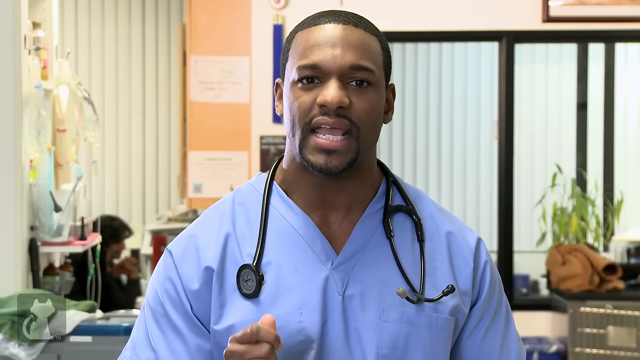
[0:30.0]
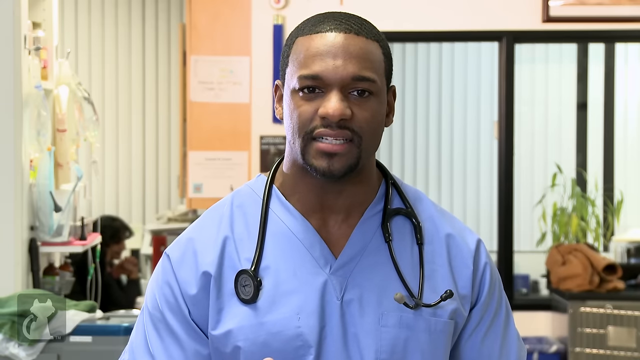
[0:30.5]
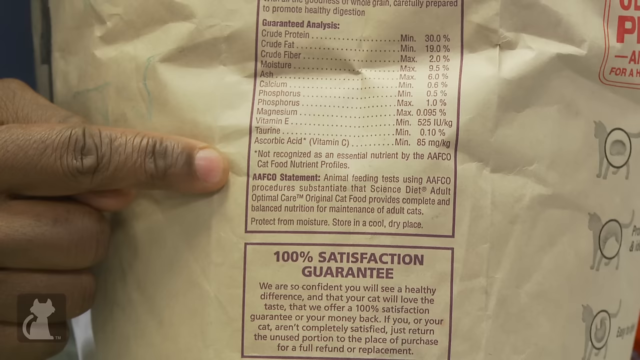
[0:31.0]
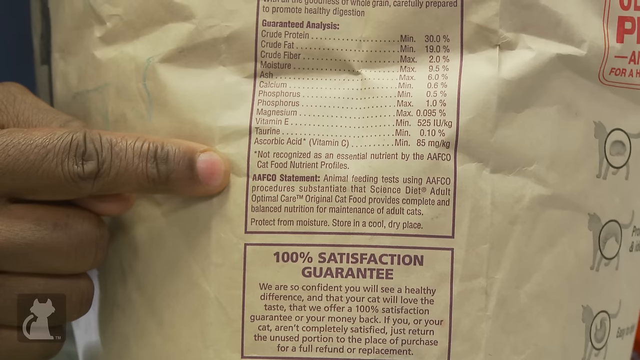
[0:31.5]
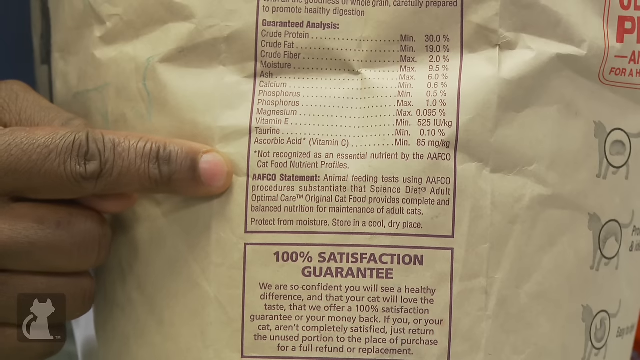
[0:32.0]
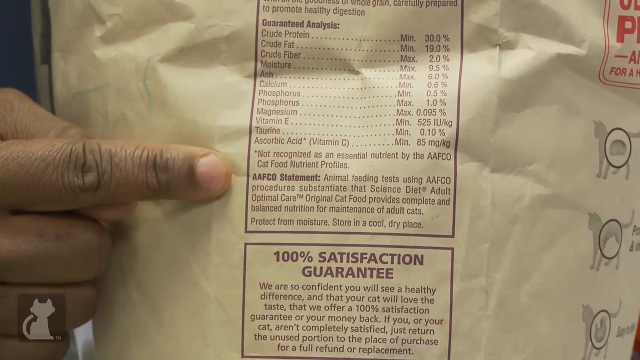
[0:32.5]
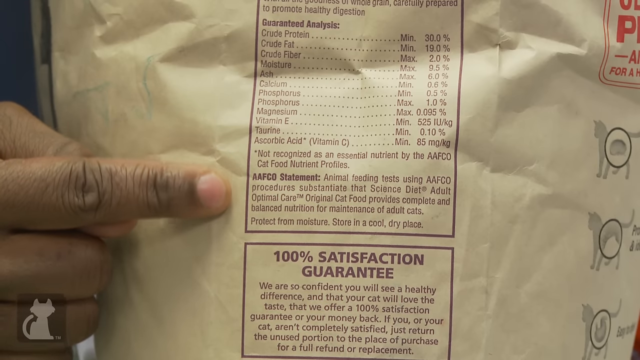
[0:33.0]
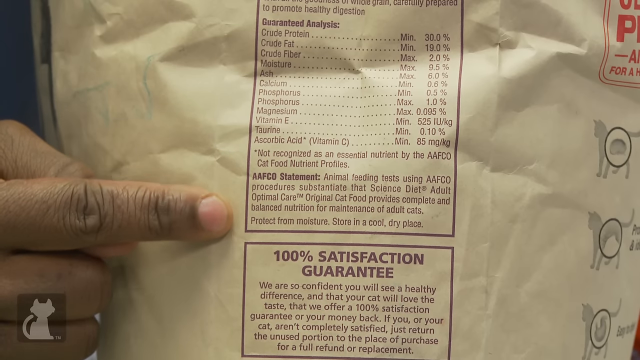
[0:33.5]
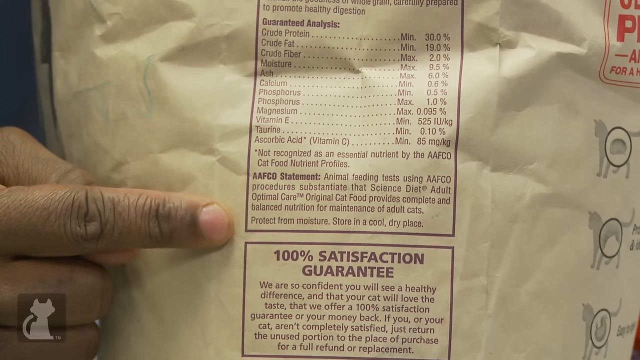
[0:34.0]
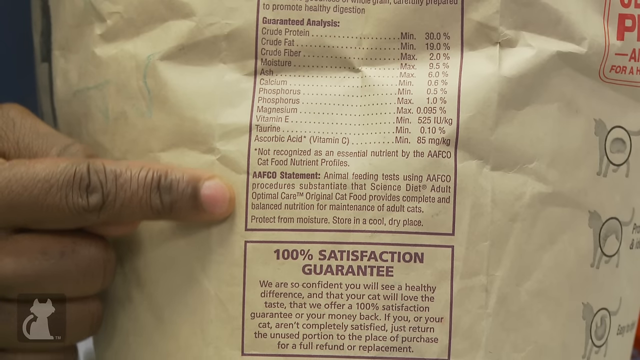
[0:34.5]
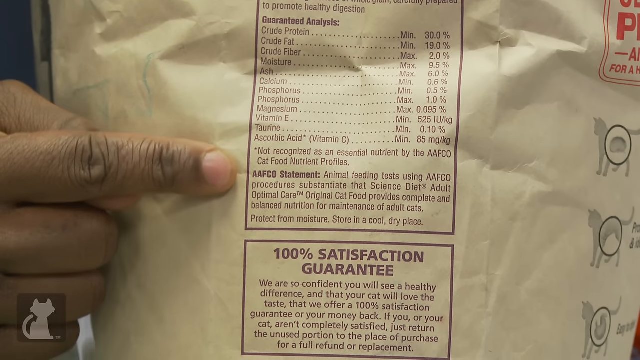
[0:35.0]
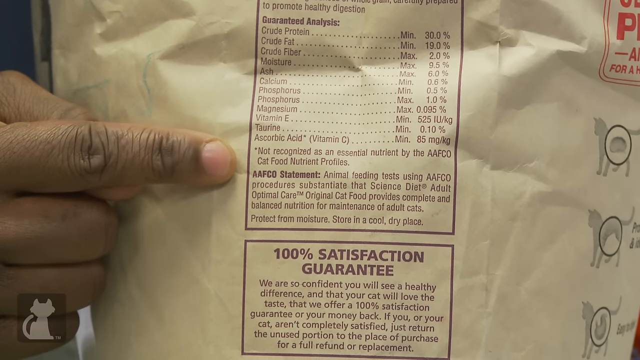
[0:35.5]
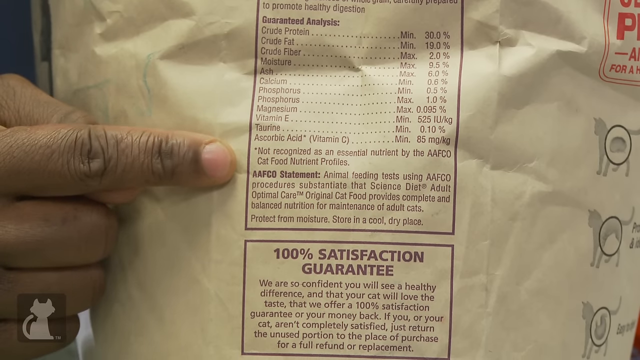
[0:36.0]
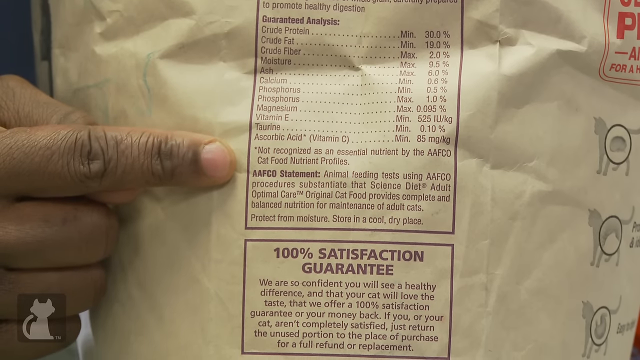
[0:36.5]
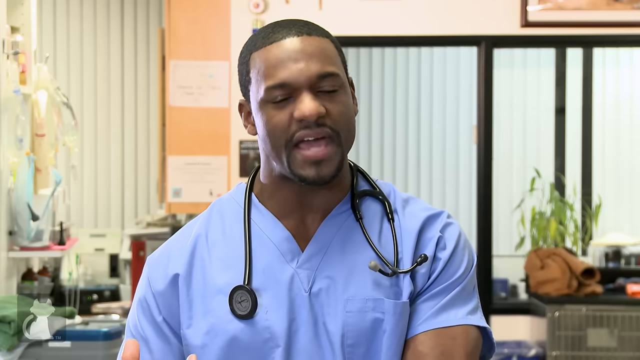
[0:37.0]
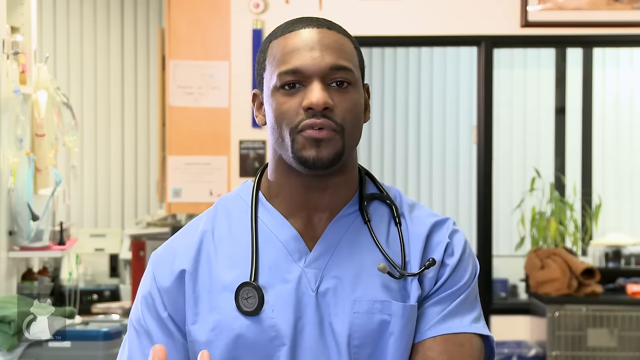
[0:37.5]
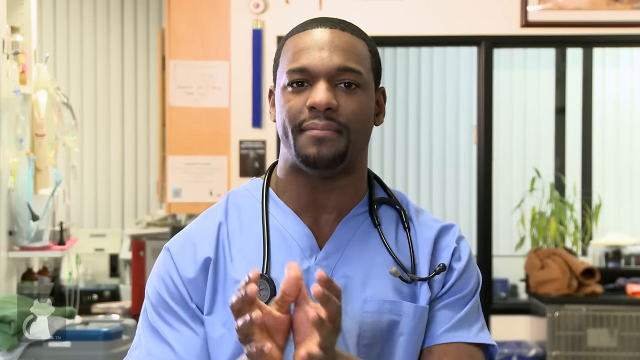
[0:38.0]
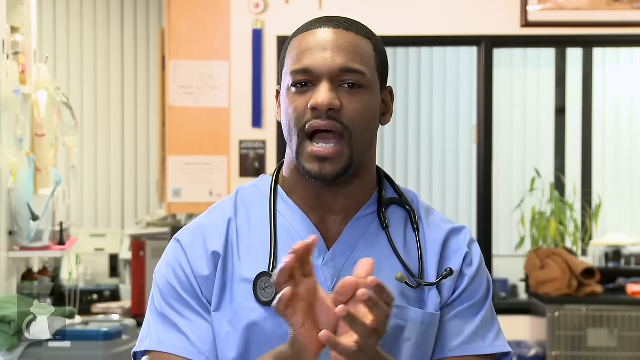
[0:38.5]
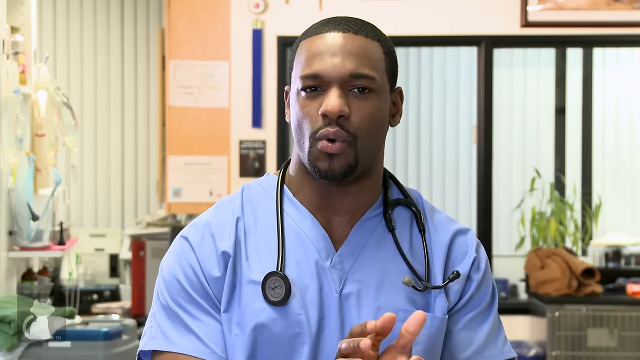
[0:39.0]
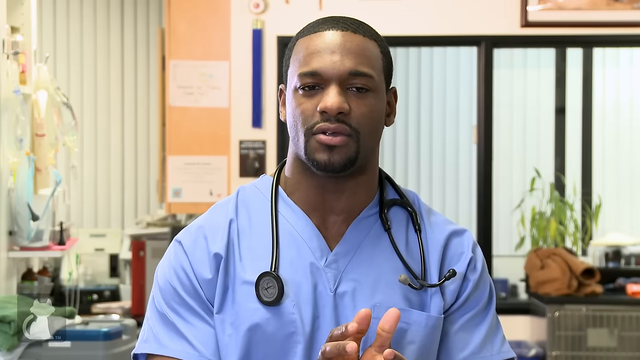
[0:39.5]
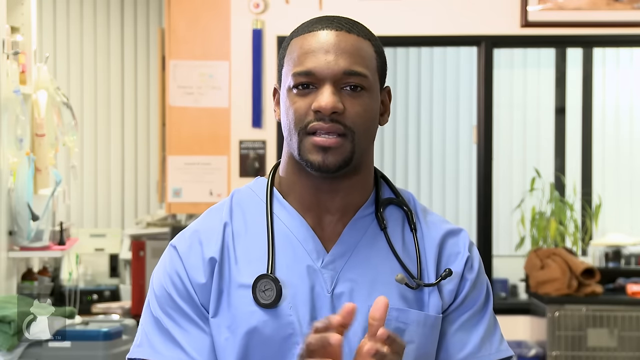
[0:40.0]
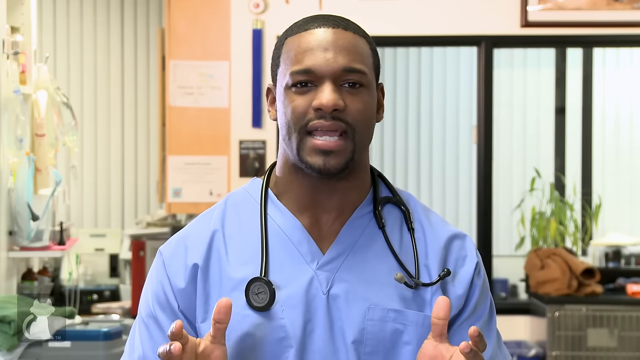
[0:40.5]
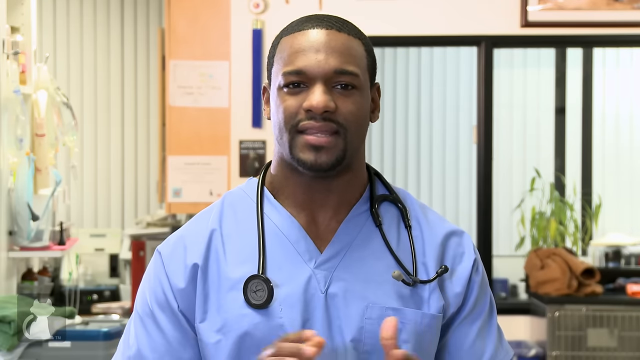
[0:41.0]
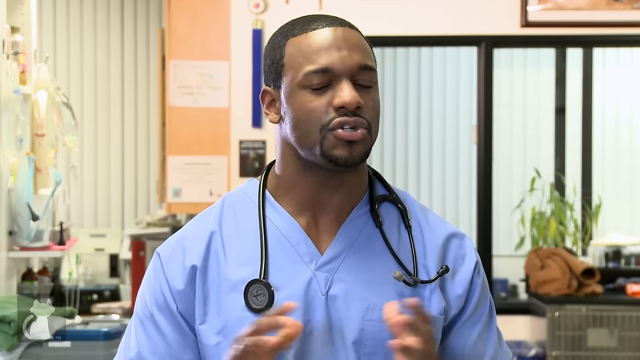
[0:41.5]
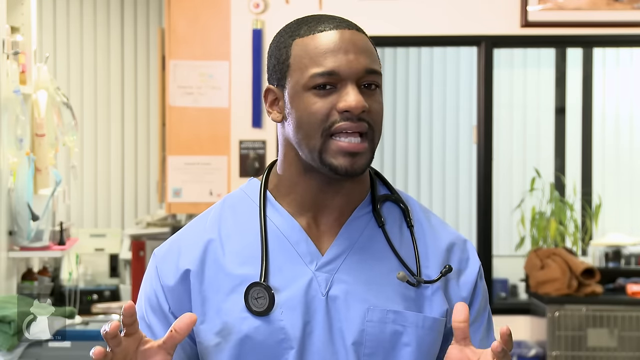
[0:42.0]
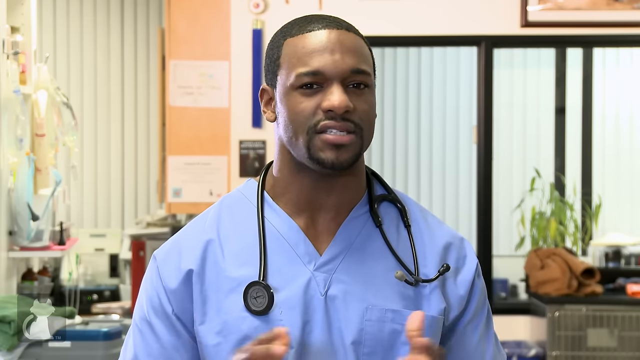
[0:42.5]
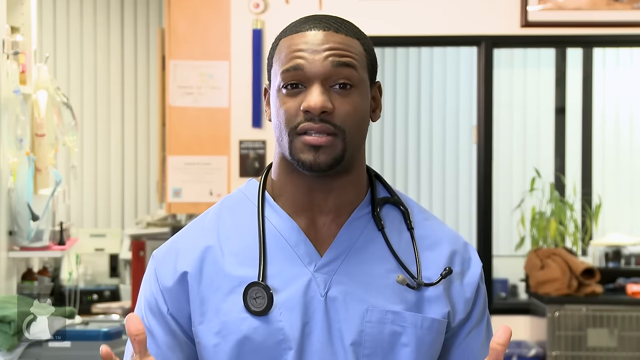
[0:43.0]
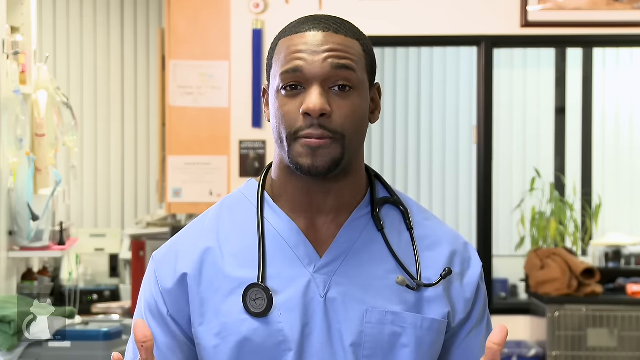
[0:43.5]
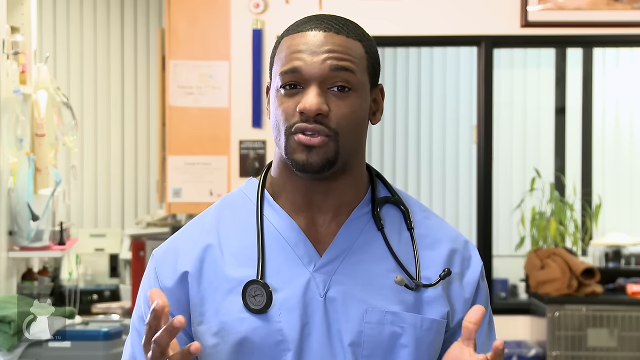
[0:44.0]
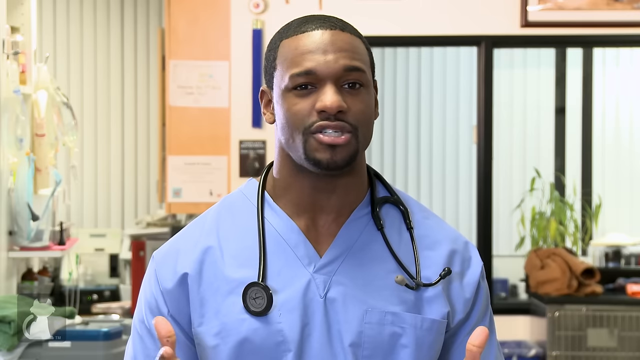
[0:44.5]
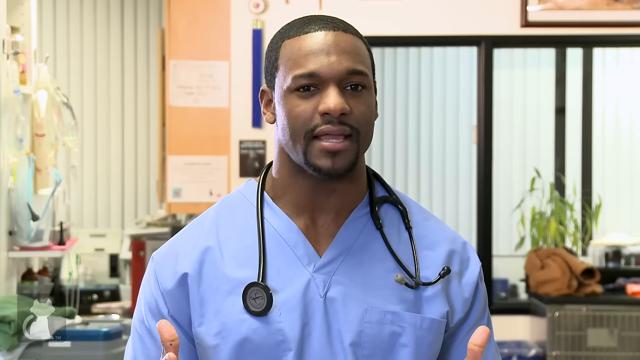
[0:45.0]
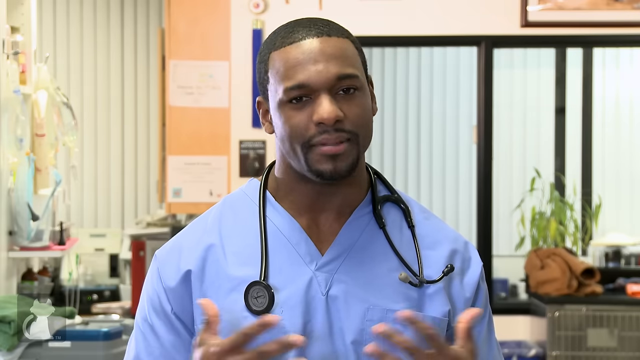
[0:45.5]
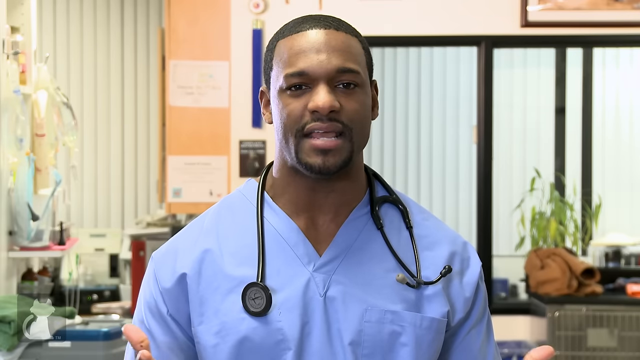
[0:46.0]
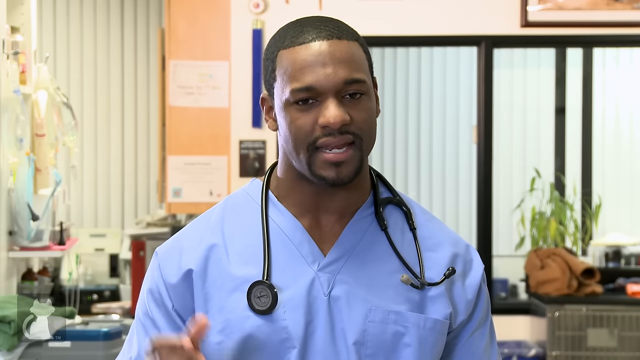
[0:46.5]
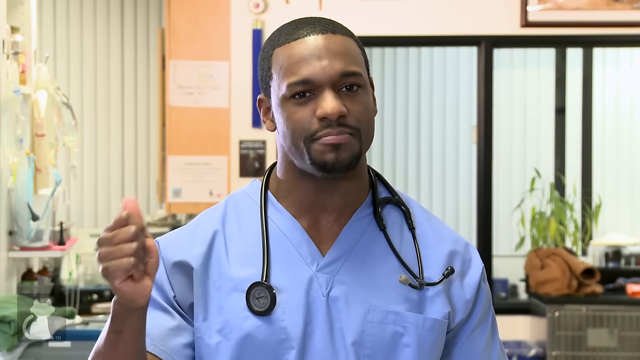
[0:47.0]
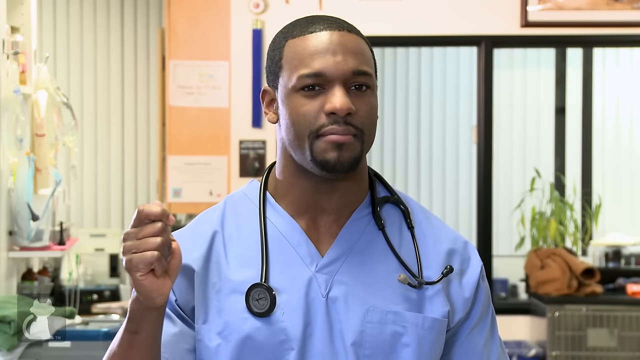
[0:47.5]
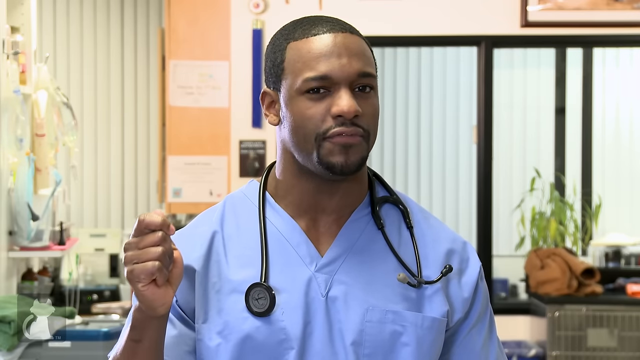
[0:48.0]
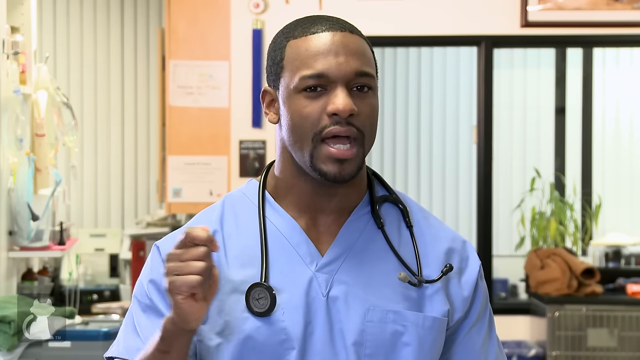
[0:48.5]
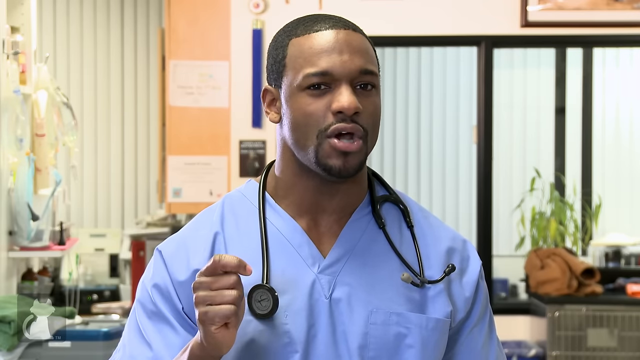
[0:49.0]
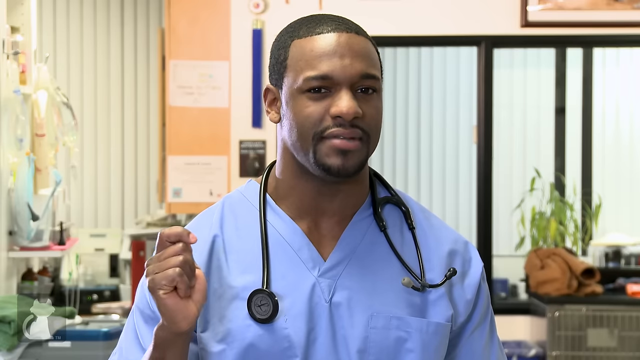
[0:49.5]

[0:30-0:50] A man in blue scrubs has a black stethoscope draped across the back of his neck. He is a Black man with very close-cropped hair and a thin, well-styled beard and mustache. He speaks inside what looks like a medical office, with potted plants in the background to the right, sliding doors, and white office drapes. Next, the man's finger points in from the left side of the frame at a nutritional label on what looks like a pale brown bag or package. On the right side of the bag is the gray outline of what looks like a dog or cat. His hand runs alongside the label as if skimming through it. He is then seen speaking again, framed from the head to the chest. He gestures gently with his hands and shakes his head a bit from side to side, as if trying to emphasize his point. At one point he clenches his right hand into a fist to emphasize what he is saying further.